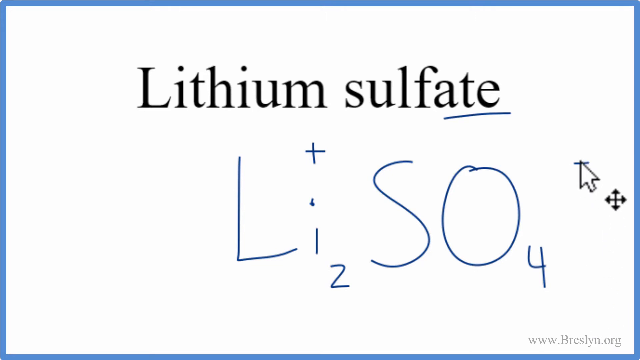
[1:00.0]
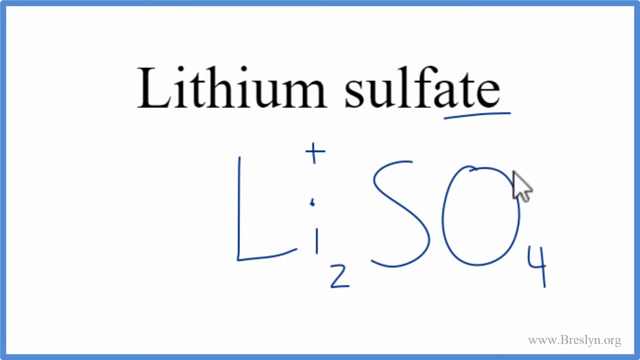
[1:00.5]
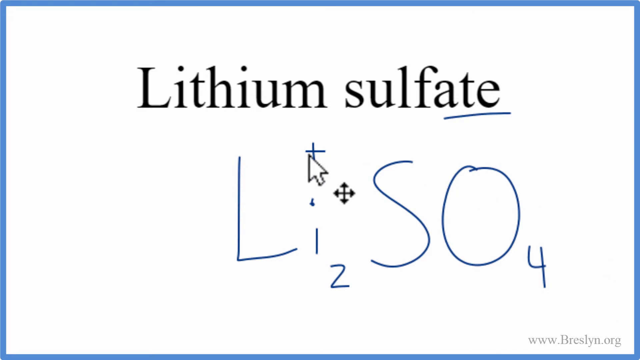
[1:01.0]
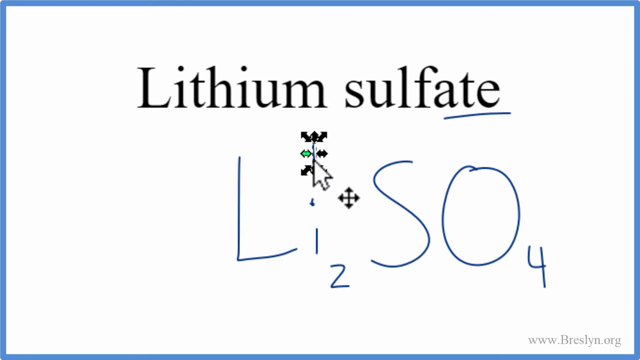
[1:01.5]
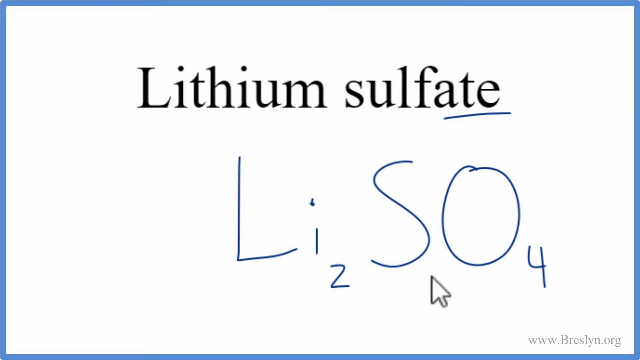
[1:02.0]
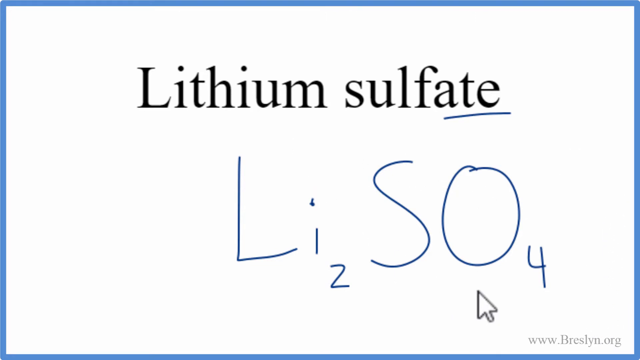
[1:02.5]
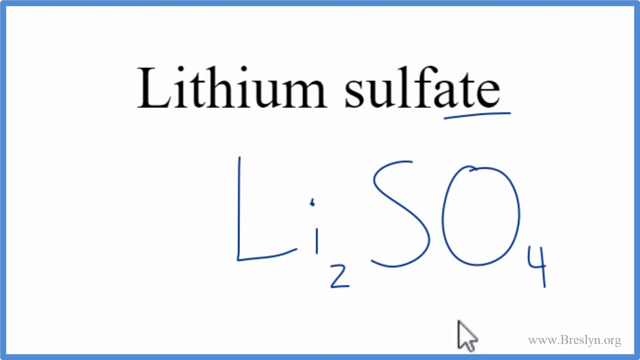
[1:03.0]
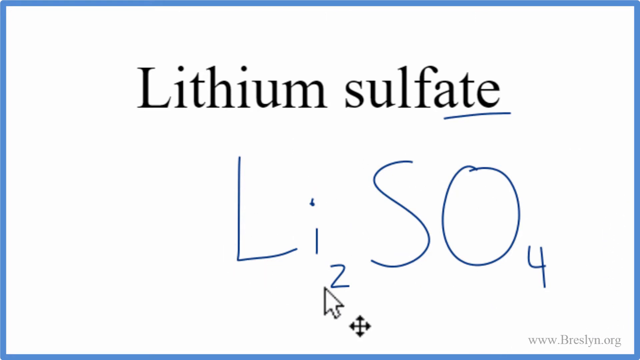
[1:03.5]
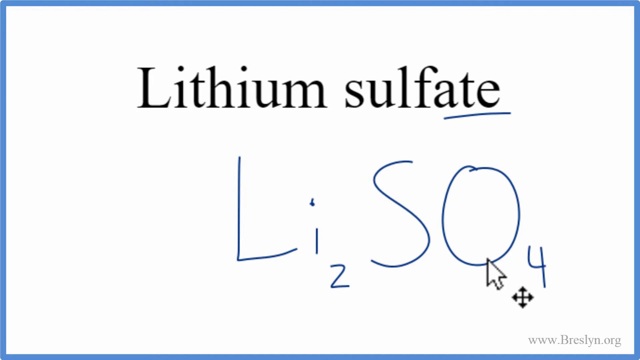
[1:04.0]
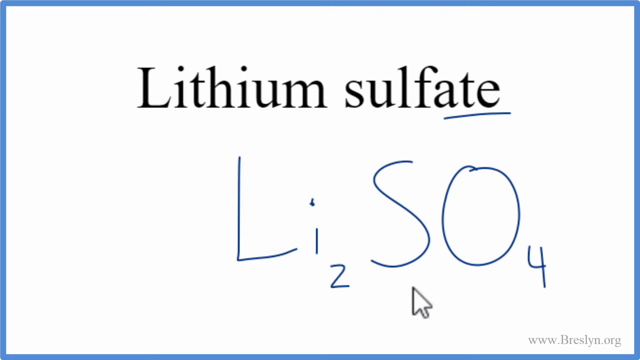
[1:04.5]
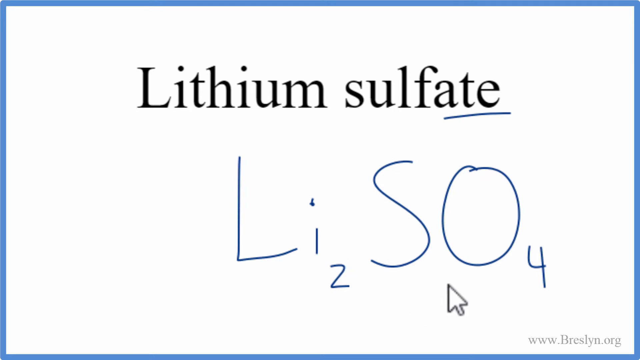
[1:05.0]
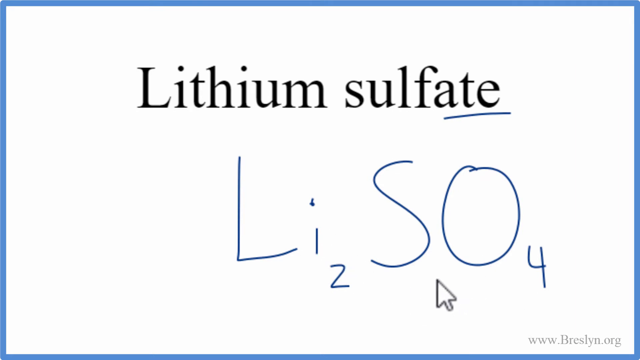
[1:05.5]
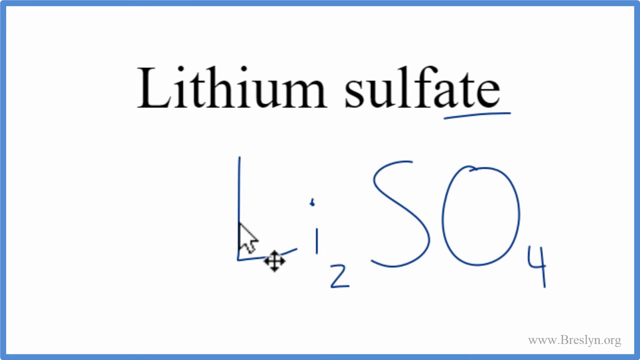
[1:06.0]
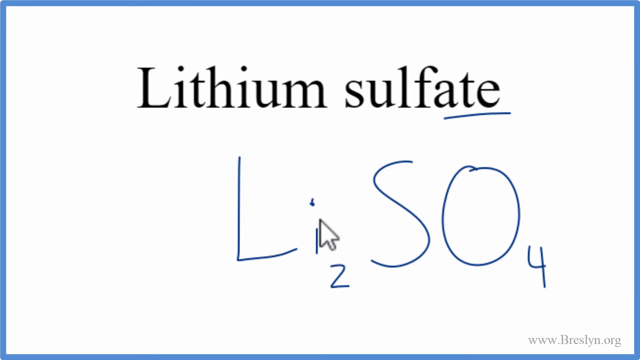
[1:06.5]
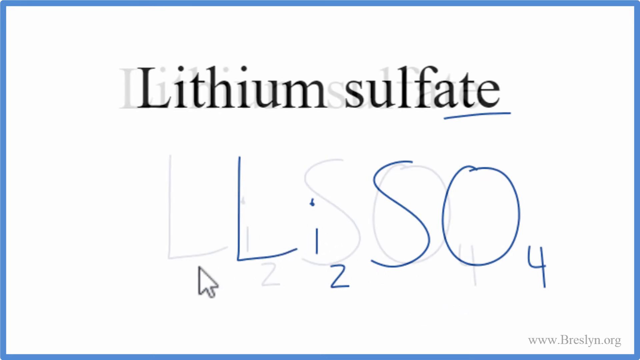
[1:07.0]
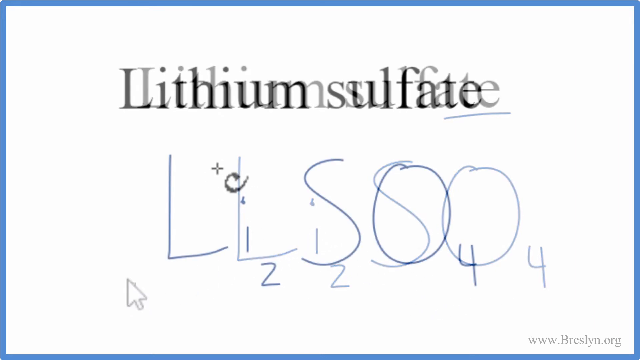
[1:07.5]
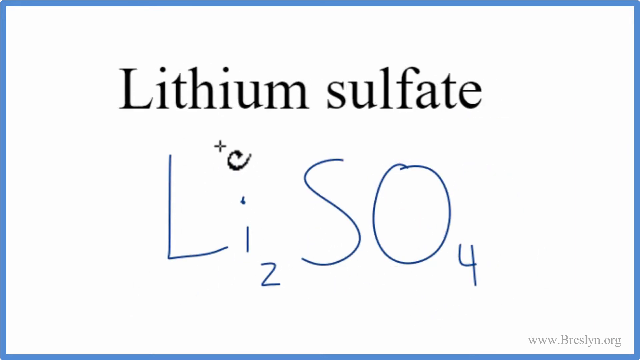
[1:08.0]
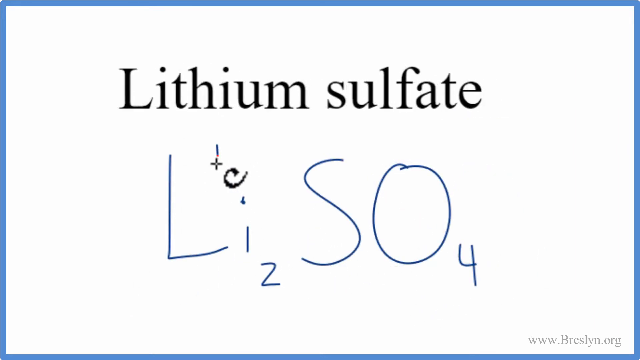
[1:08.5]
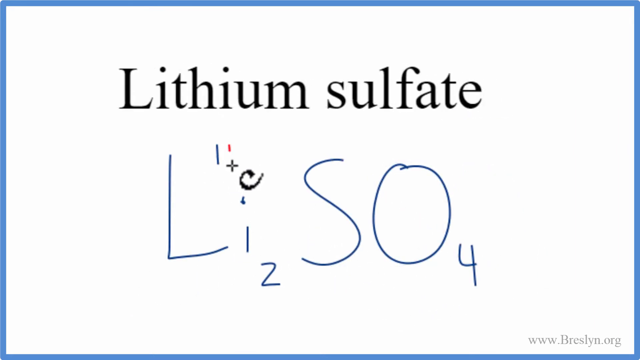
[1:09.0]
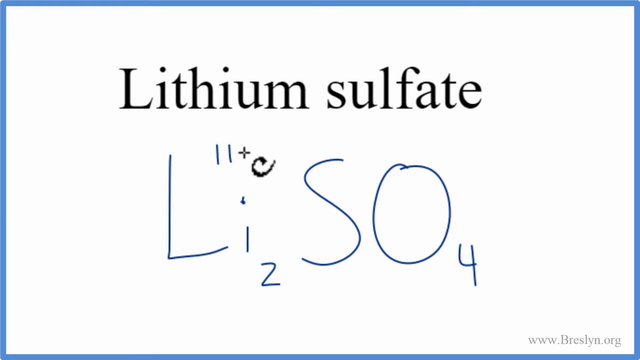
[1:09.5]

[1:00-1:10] The minus and plus signs appear to be deleted. The screen then transitions to lithium sulfate, apparently moving on to a new screen.